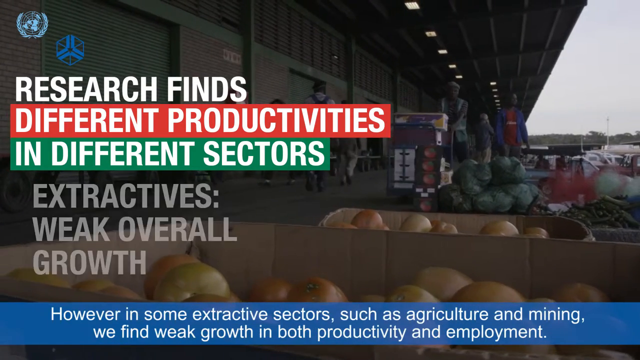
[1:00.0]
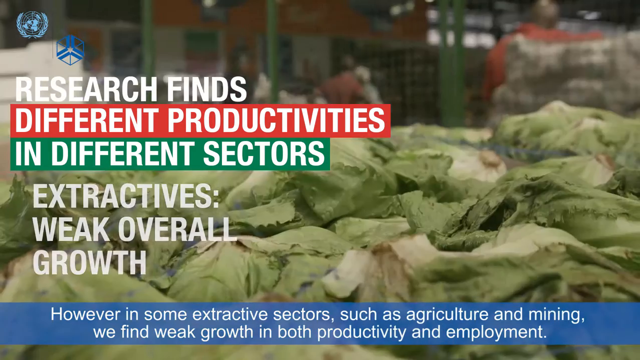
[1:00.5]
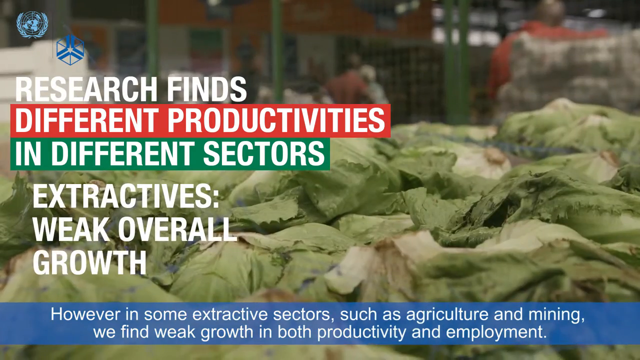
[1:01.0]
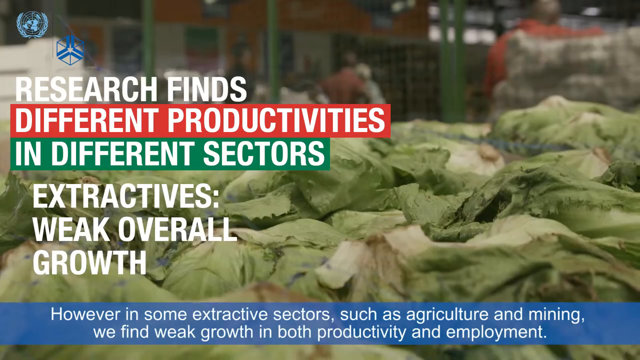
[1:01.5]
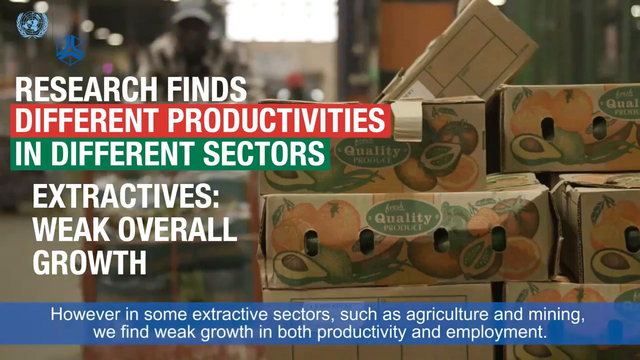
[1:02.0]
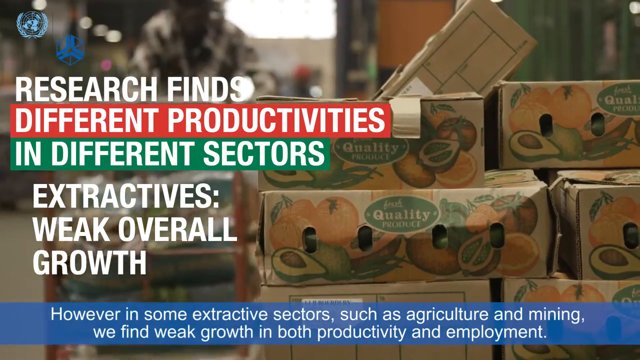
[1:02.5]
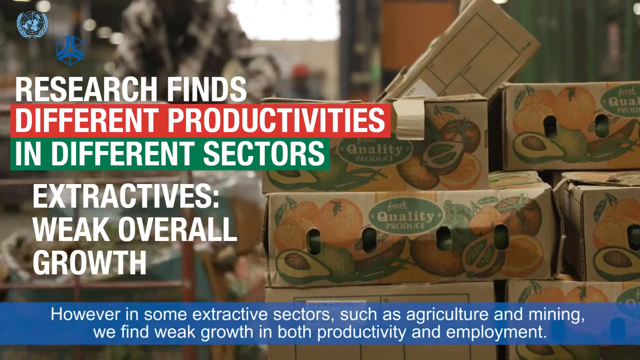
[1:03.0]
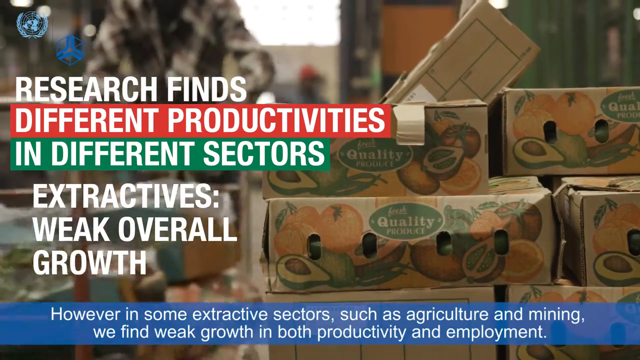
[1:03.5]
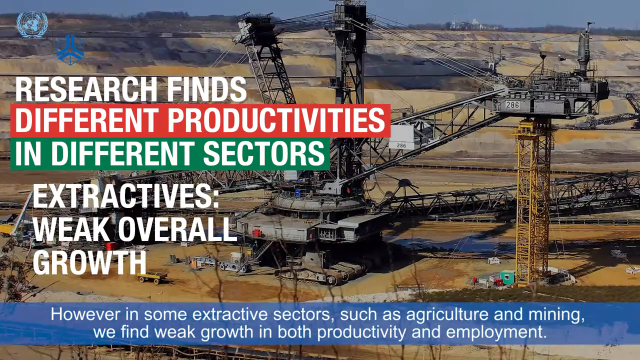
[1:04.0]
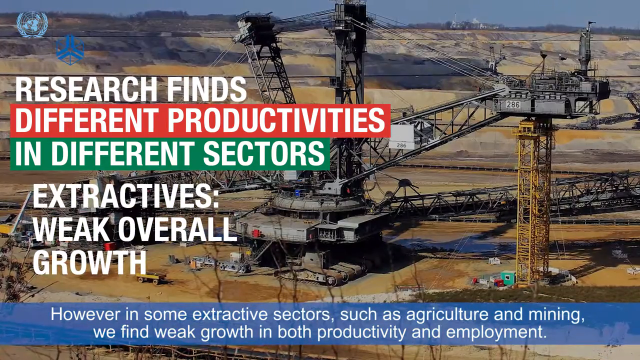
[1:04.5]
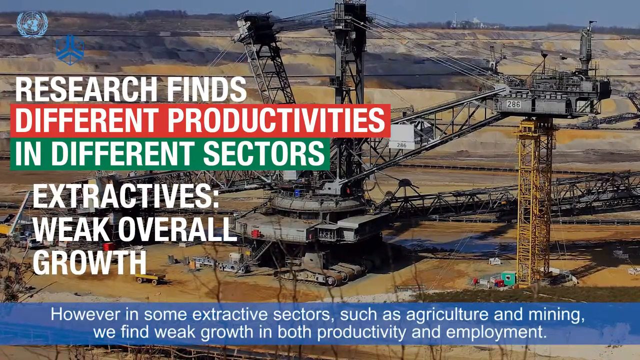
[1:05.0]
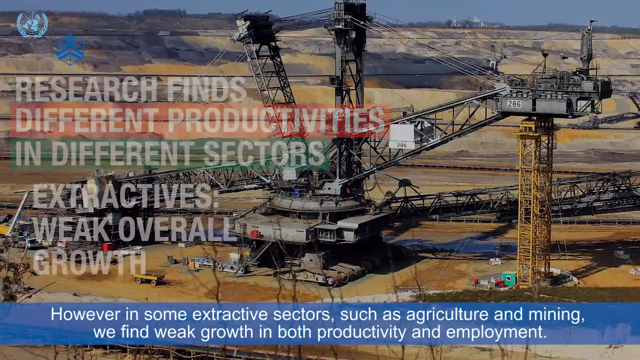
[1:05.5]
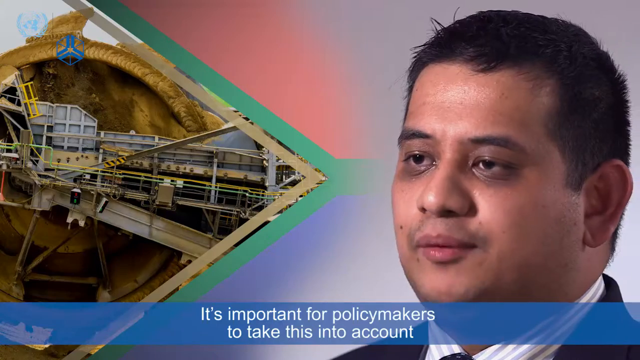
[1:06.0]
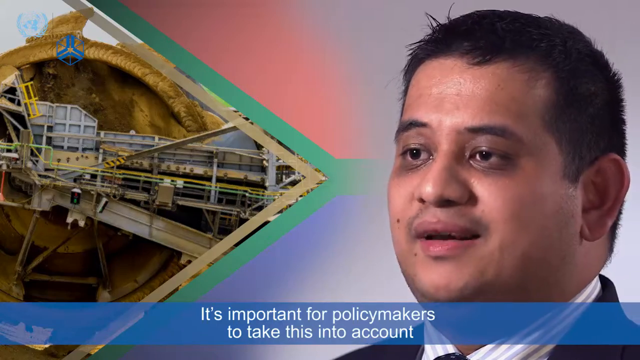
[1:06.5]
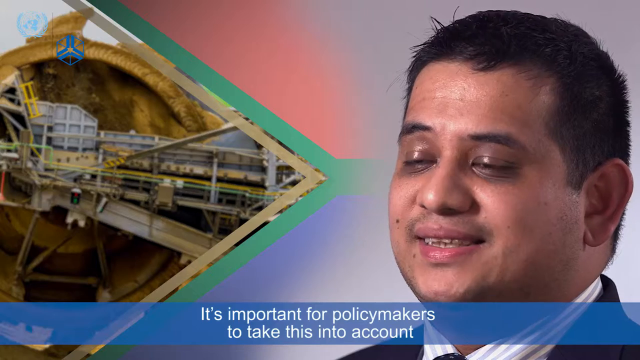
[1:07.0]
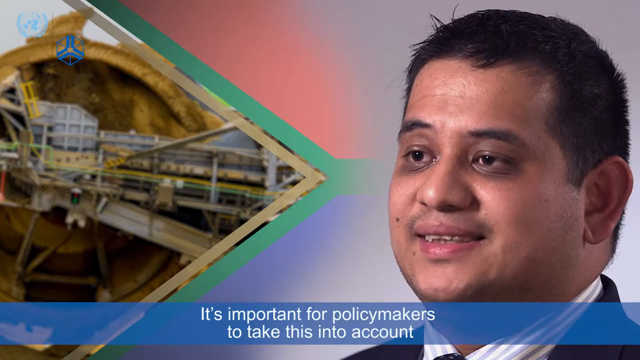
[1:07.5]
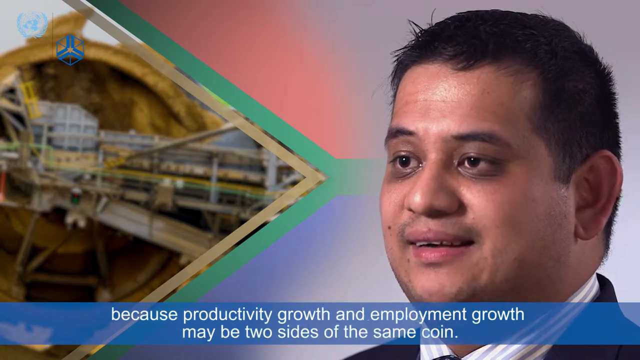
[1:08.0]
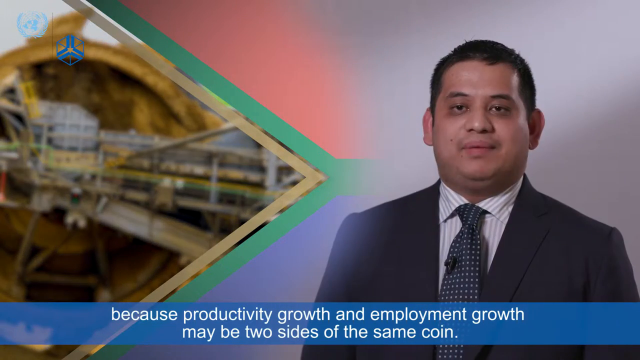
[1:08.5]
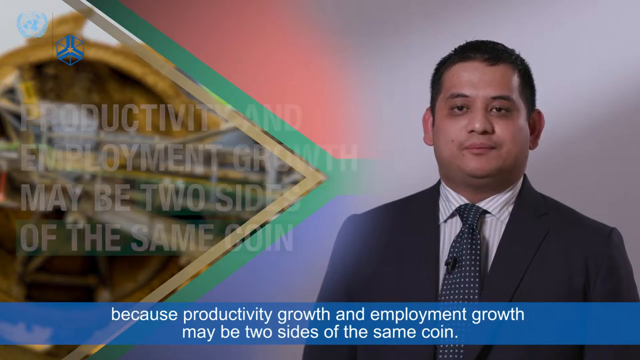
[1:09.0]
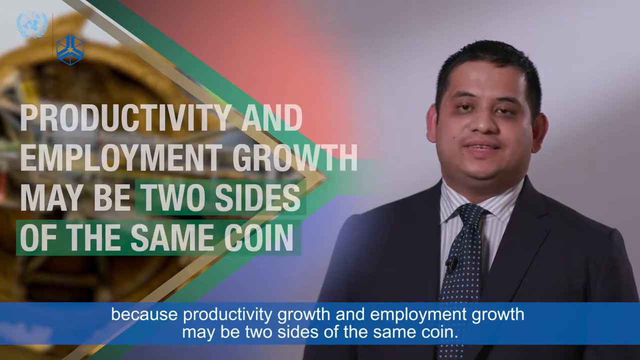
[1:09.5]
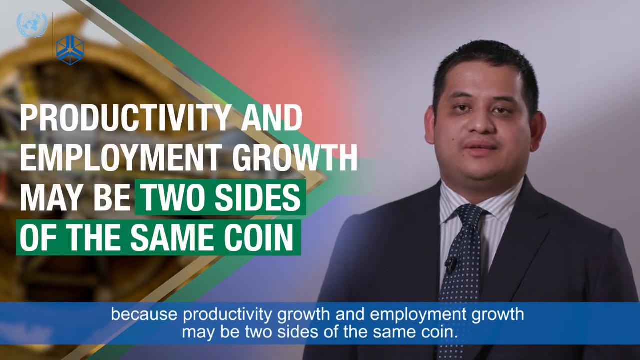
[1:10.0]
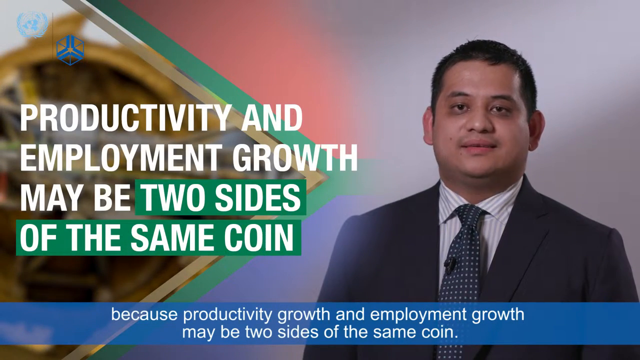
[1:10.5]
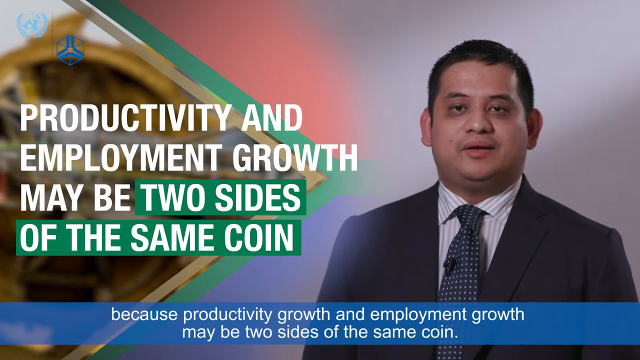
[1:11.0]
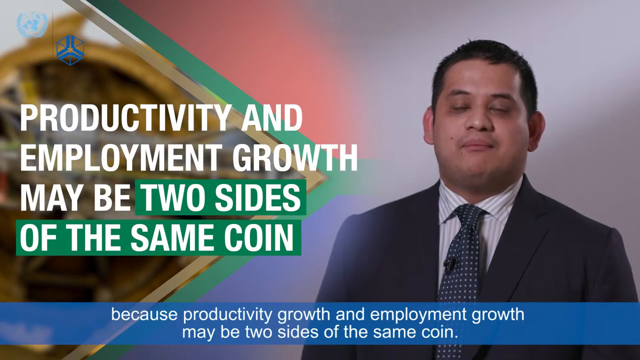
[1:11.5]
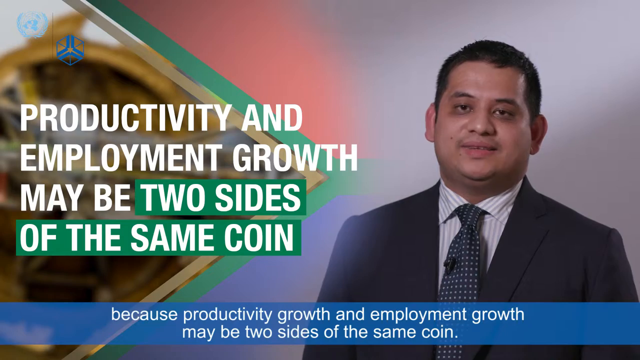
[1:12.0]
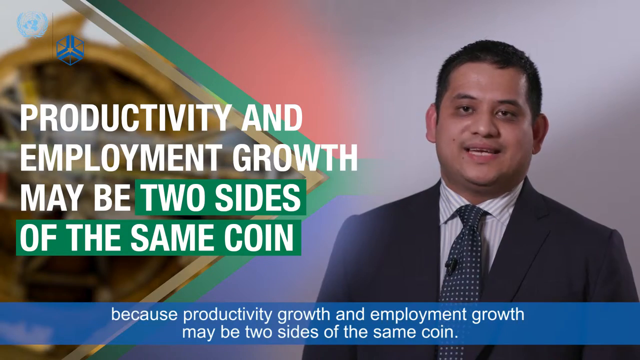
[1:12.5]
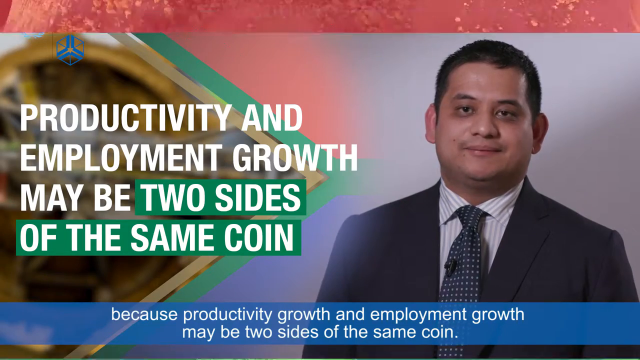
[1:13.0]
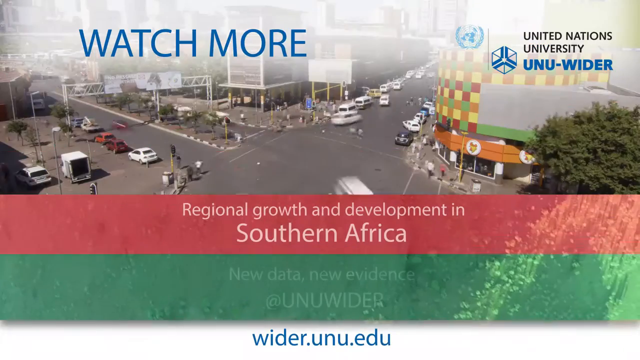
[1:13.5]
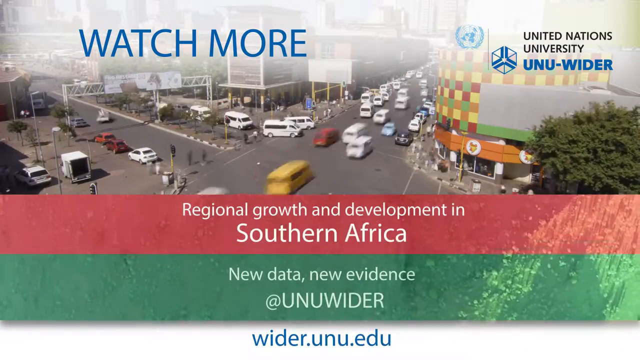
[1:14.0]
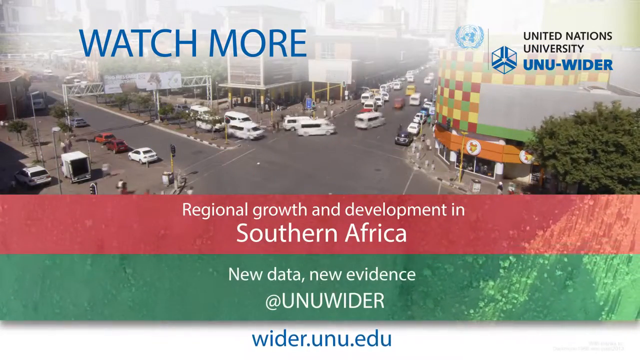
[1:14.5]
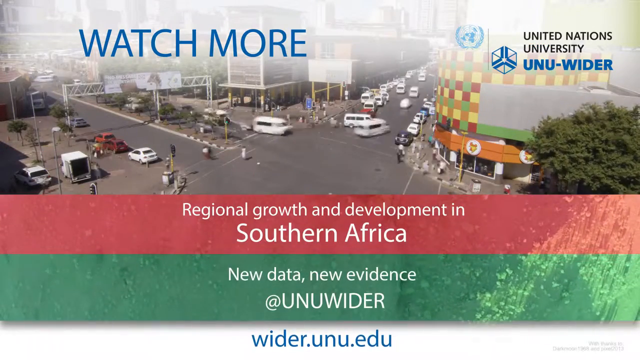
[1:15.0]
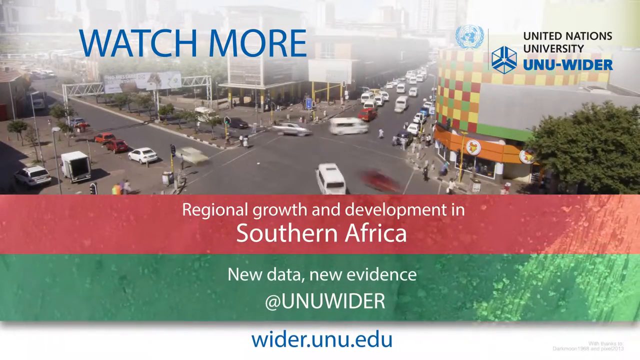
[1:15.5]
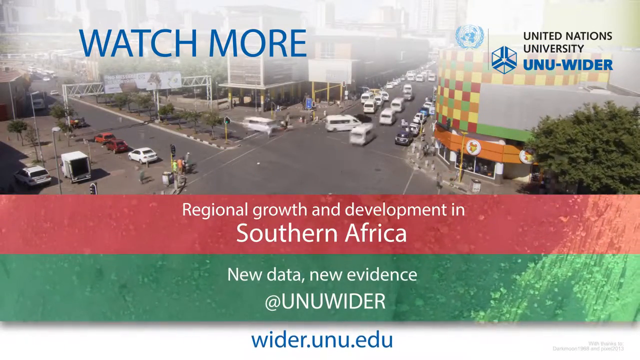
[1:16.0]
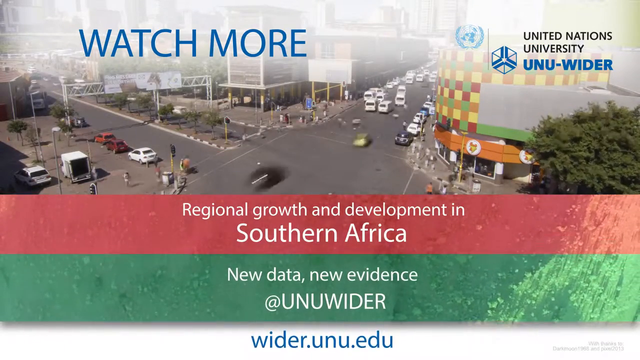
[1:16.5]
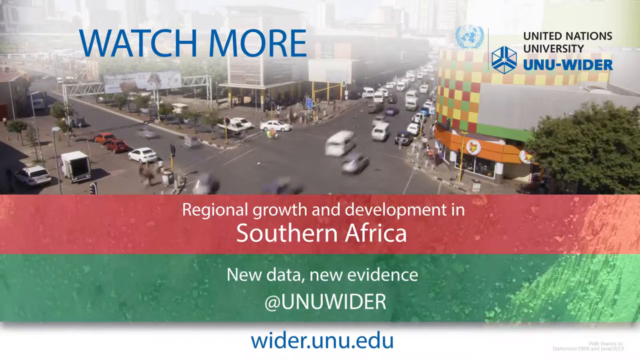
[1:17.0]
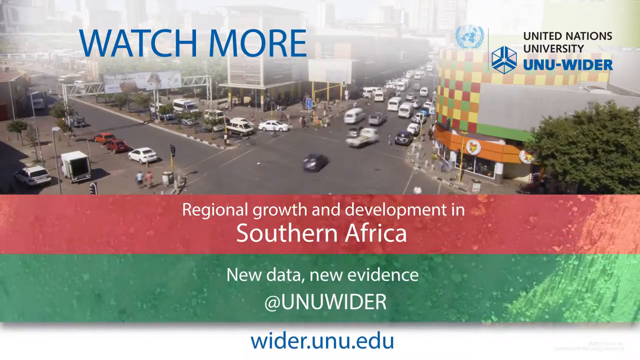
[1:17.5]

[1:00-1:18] Footage interspersed with the presenter includes market stalls with vegetables and a large image of a huge piece of mining equipment. The video finishes with an overlay mentioning contact for regional growth and development in South Africa, along with UNWIDER, United Nations University.